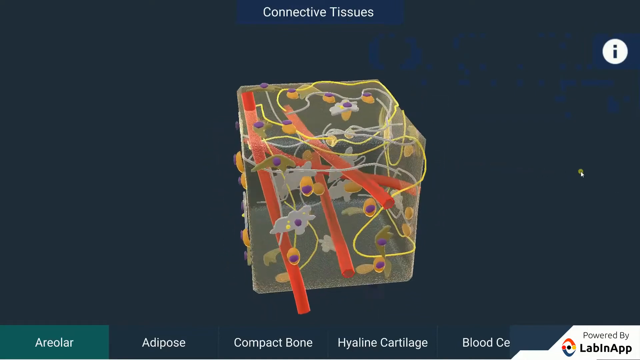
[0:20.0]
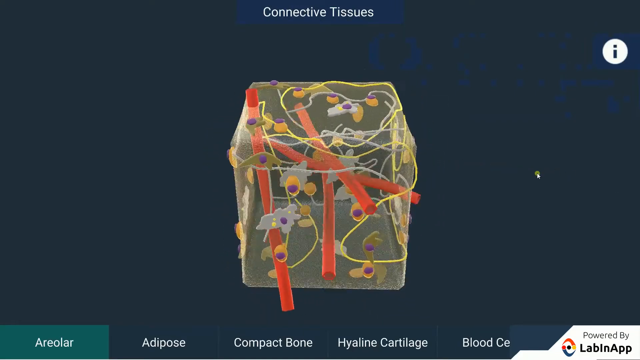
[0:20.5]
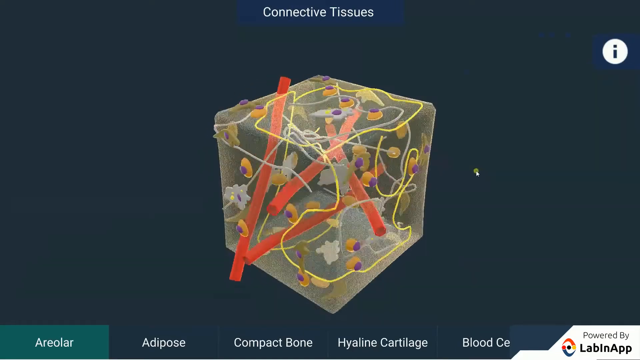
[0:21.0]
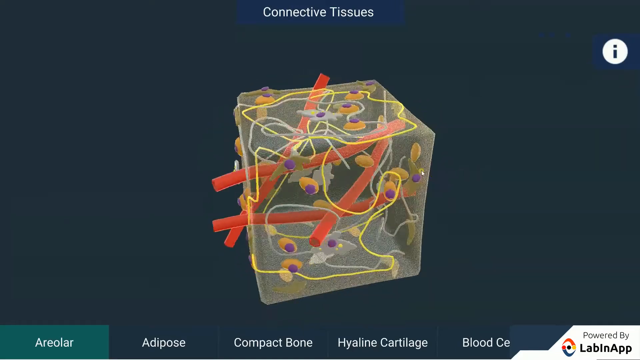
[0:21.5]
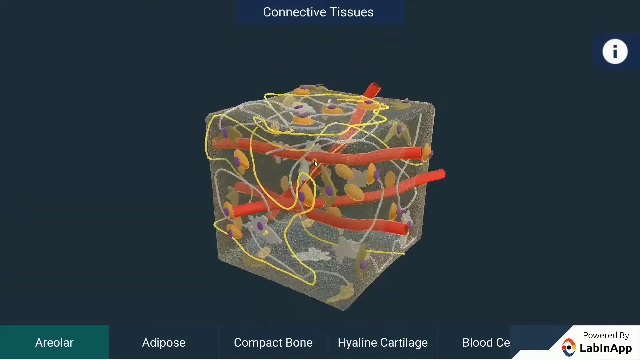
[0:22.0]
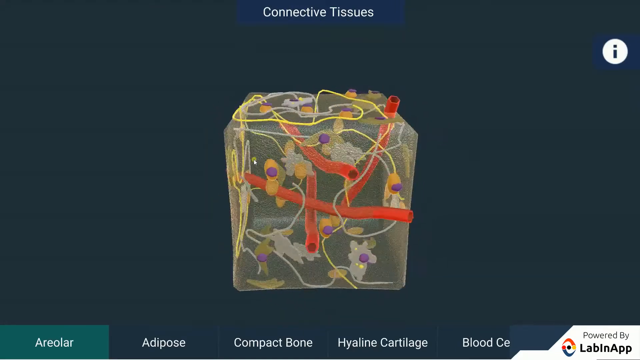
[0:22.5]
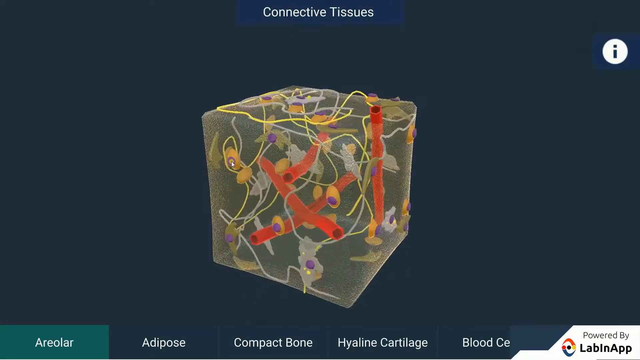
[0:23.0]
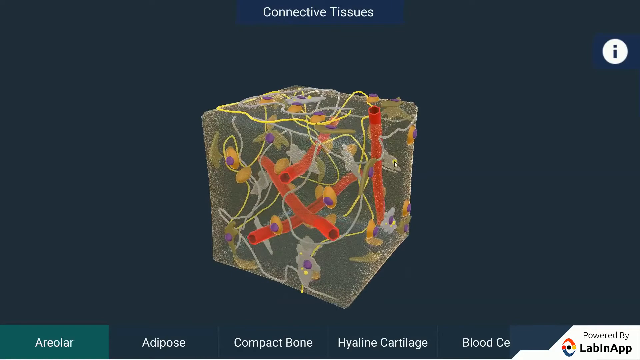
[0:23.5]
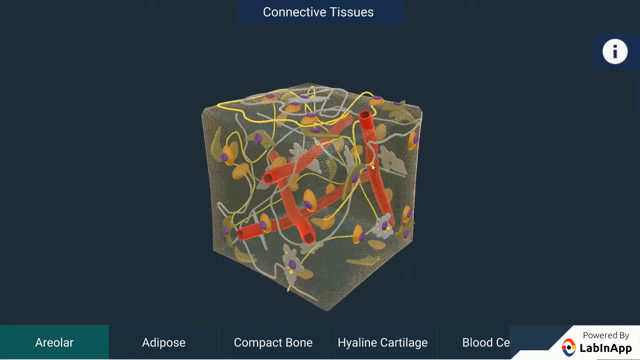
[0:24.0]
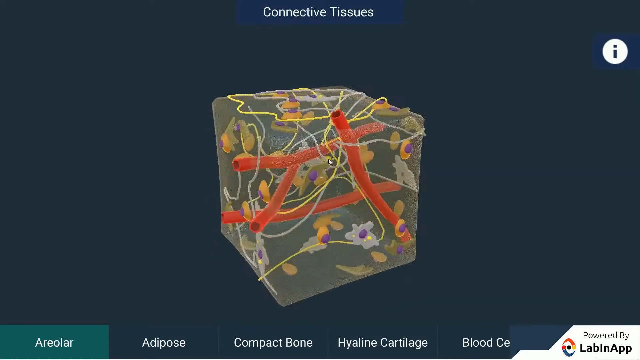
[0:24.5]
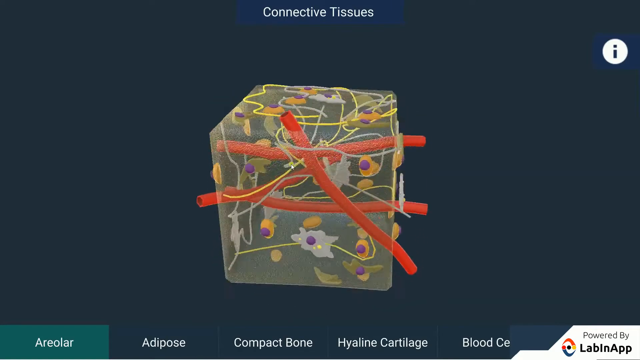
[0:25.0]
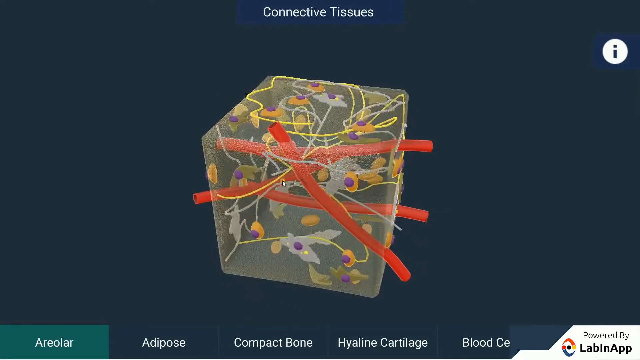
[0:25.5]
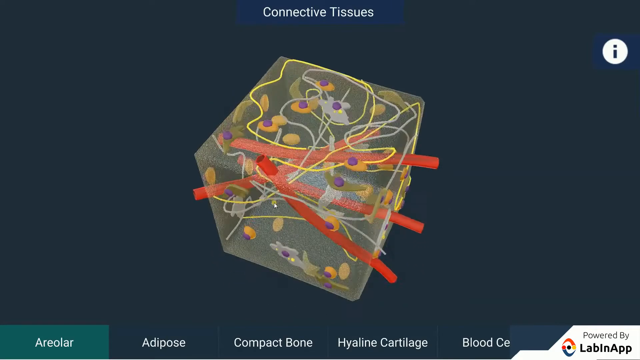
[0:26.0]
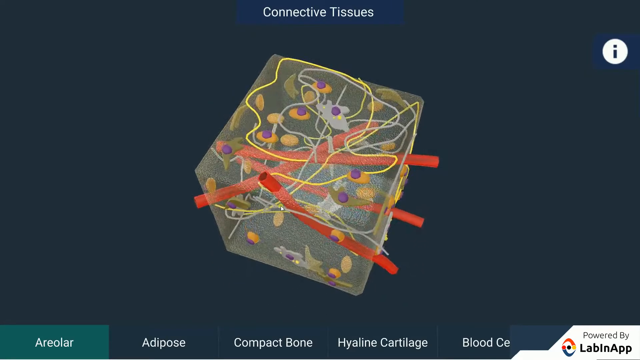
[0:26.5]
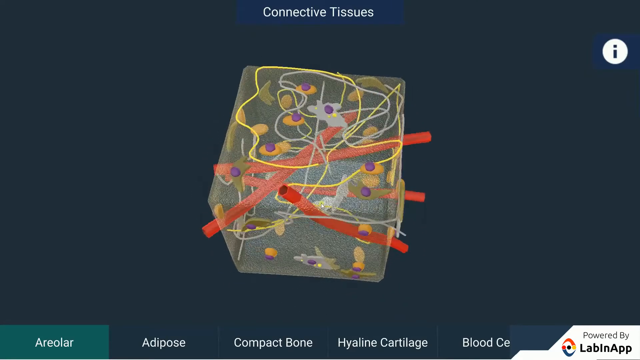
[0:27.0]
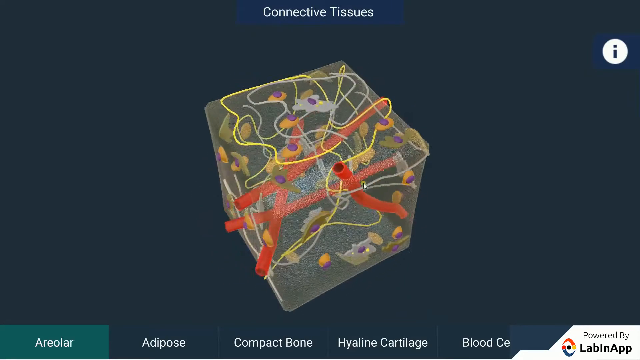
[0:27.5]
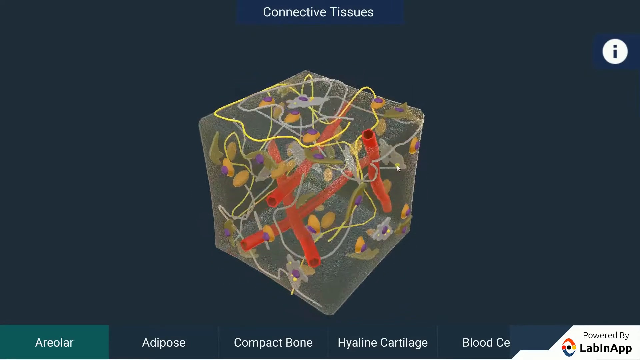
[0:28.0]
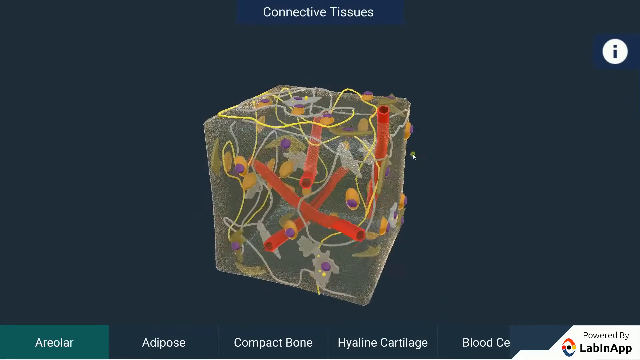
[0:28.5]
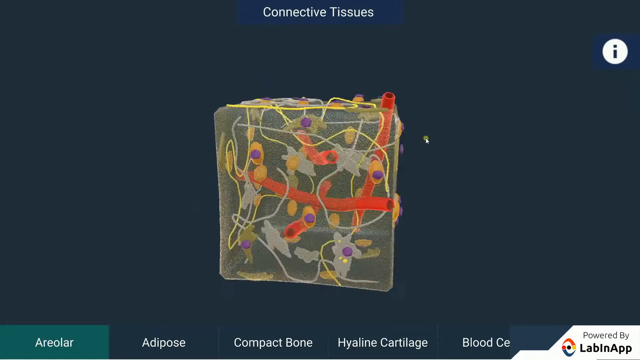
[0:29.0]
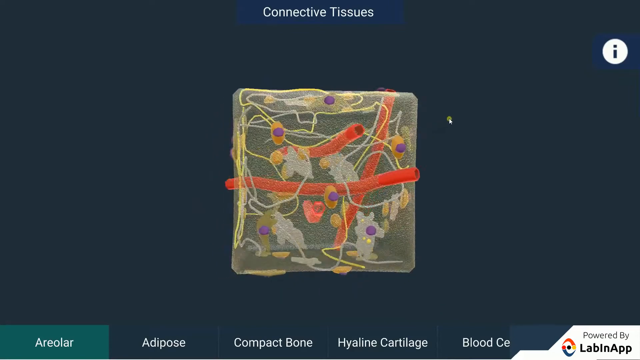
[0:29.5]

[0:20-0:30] The same animated cube continues in a closer view. The cursor rotates it from side to side to show its details. It seems to be a program or cell phone application for viewing different medical concepts. A menu below shows options such as "Areolar," "Adipose," "Compact Bone," "Hyaline Cartilage" and "Blood Cell." The video then cuts abruptly.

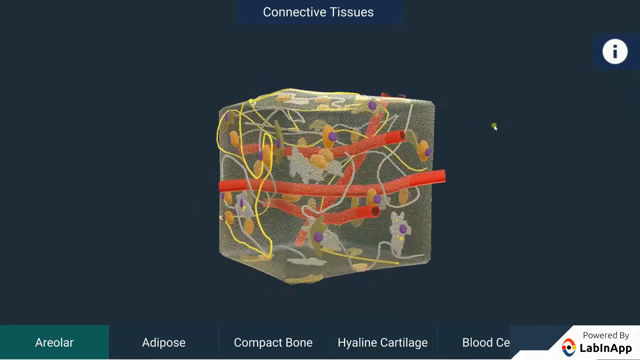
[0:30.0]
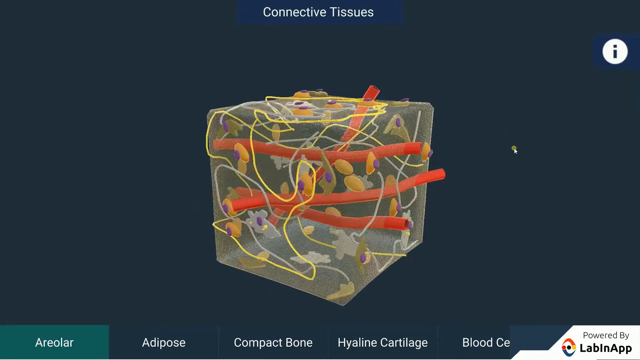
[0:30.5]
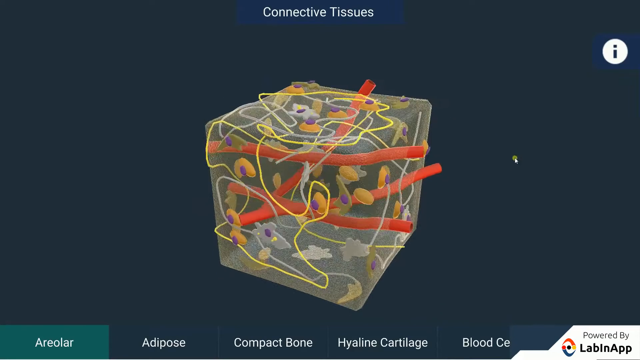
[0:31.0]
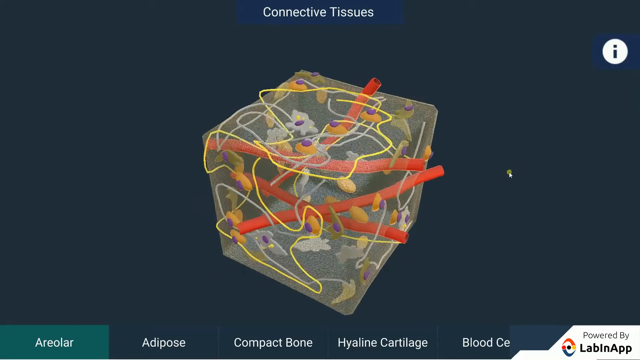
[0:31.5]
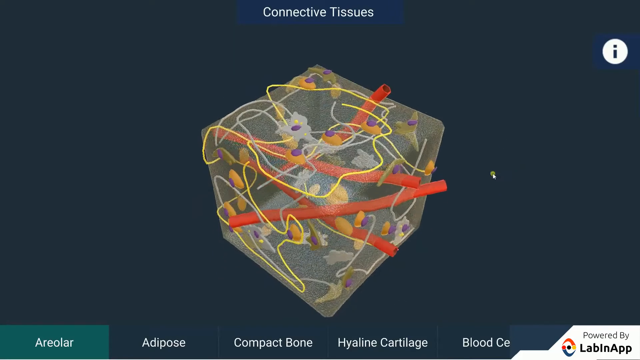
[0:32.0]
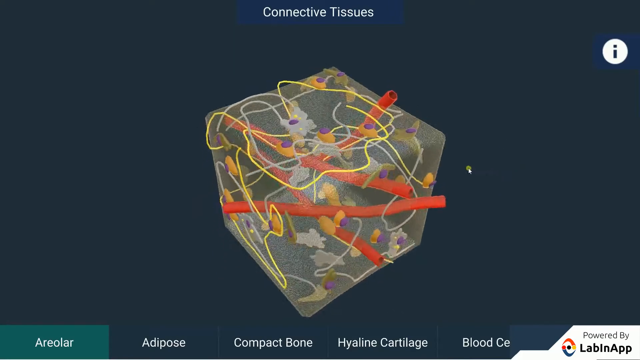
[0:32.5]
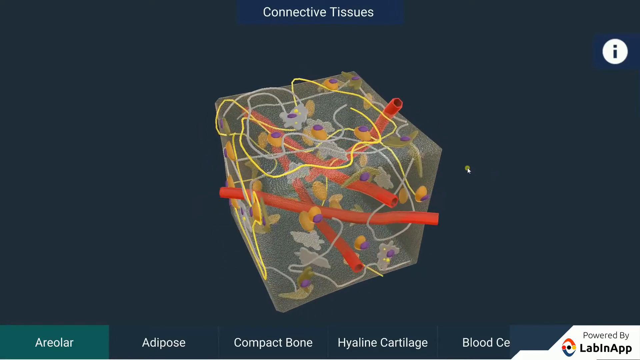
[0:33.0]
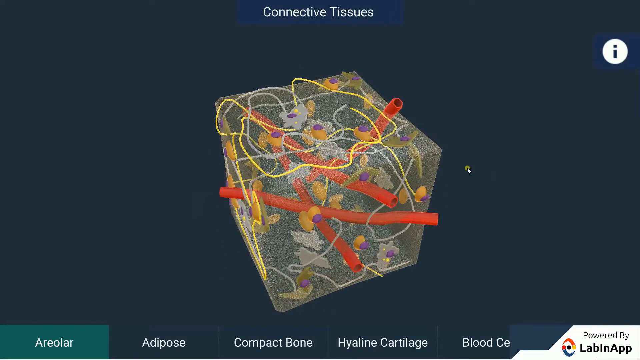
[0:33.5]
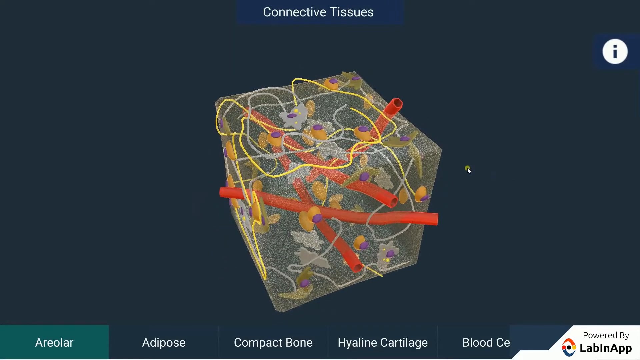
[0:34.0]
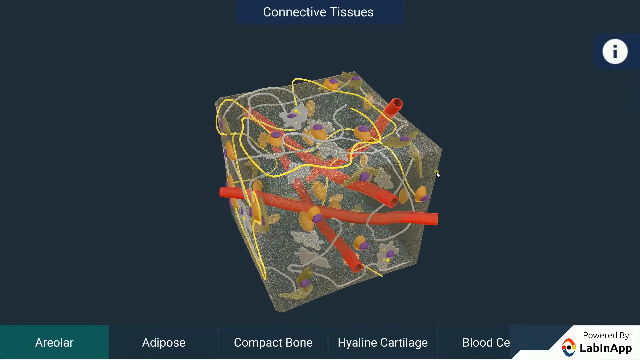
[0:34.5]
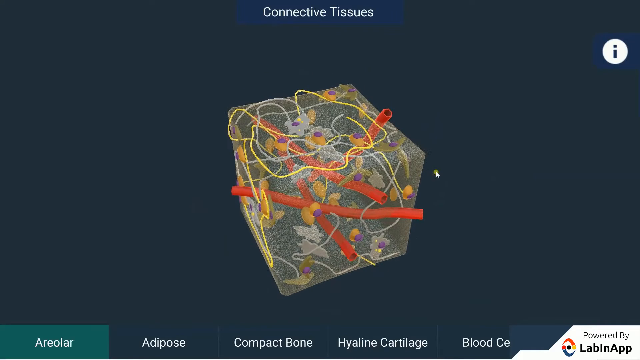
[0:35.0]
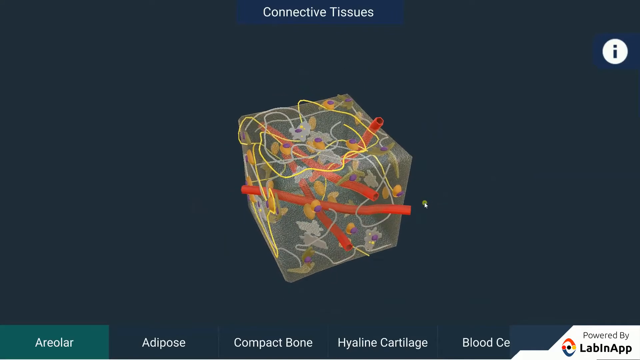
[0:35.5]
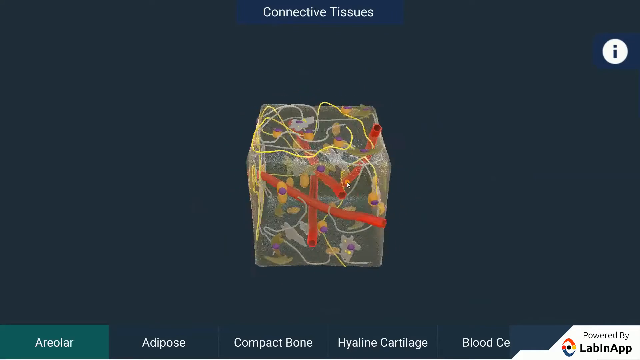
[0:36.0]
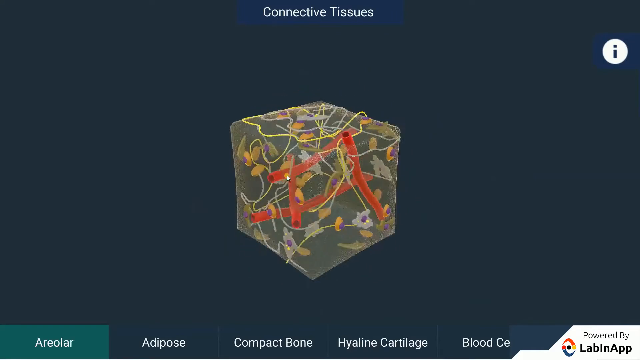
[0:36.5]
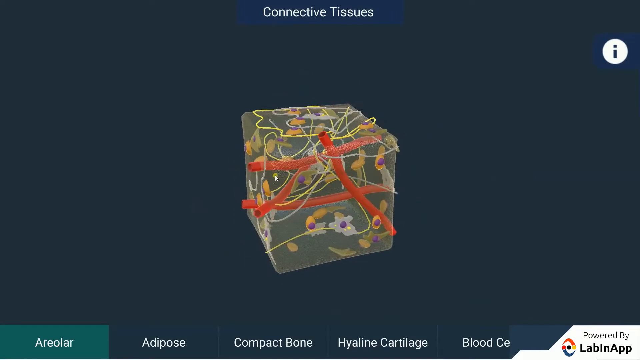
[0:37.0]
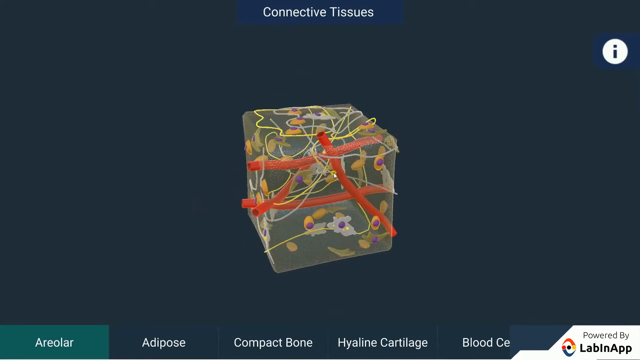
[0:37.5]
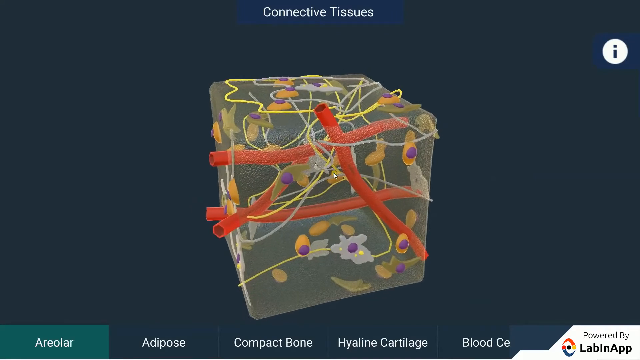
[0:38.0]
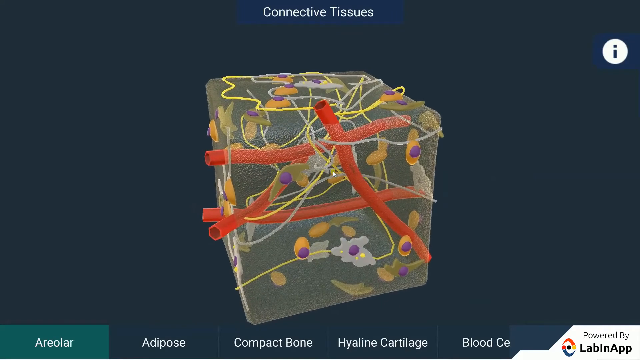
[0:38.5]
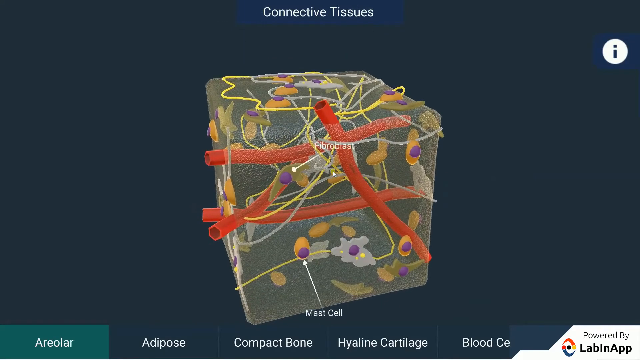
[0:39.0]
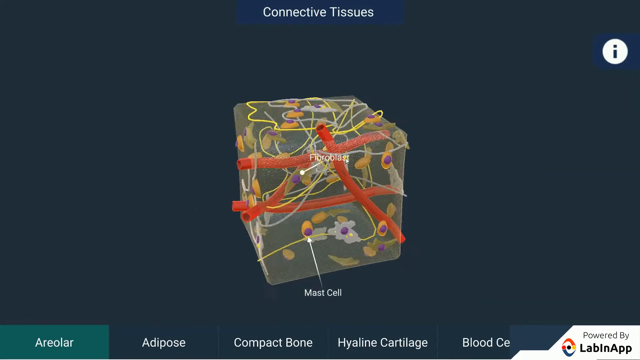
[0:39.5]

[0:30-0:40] The cursor keeps turning and rotating the same cube to show its details. At the lower right is the logo of a product or company that says "Powered by LabinApp." Two labels then appear with arrows pointing to two positions inside the 3D cube: one says "Fibroblast" and the other "Mast Cell," each pointing to a different organelle of the connective tissue.